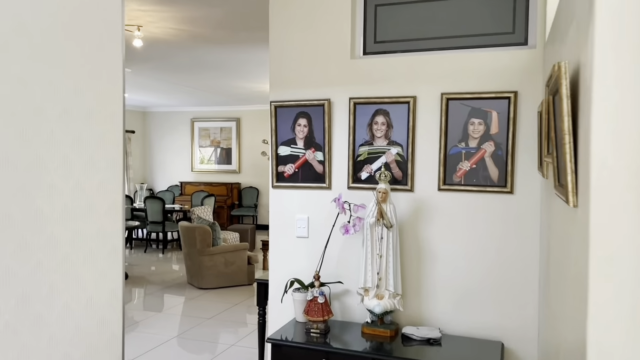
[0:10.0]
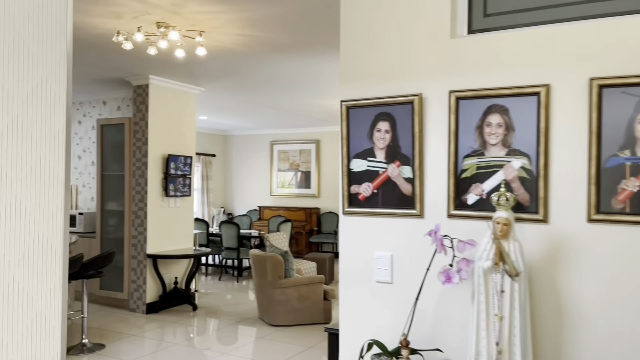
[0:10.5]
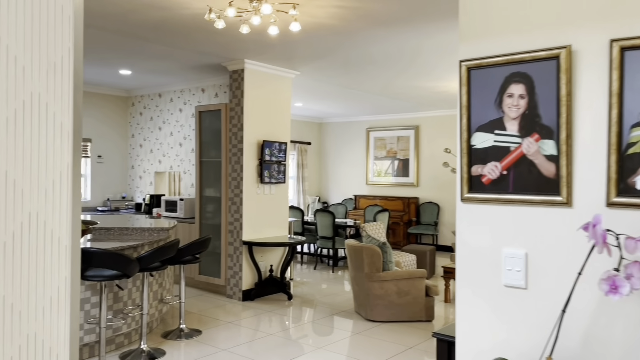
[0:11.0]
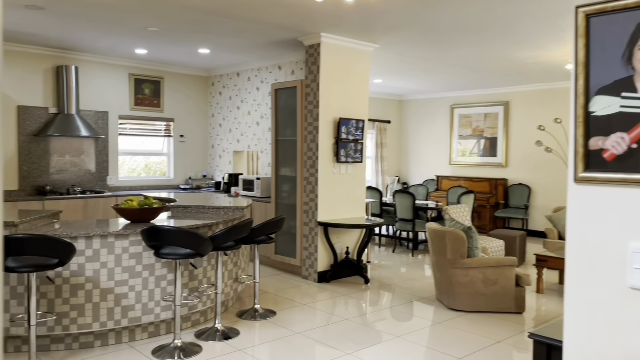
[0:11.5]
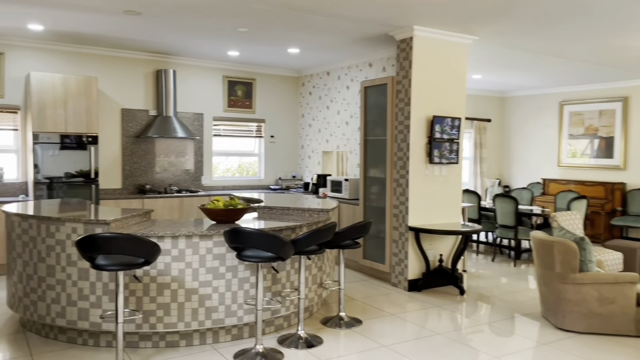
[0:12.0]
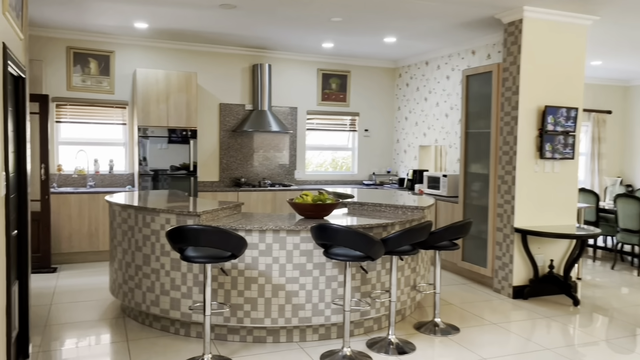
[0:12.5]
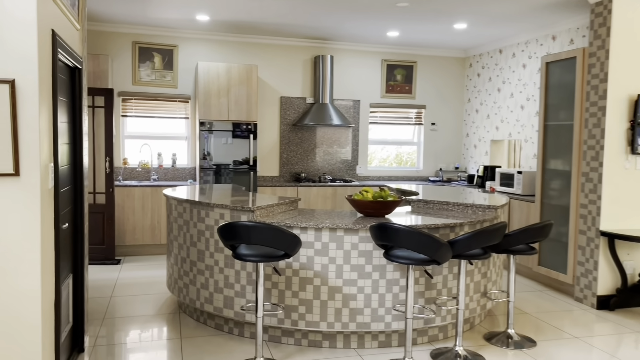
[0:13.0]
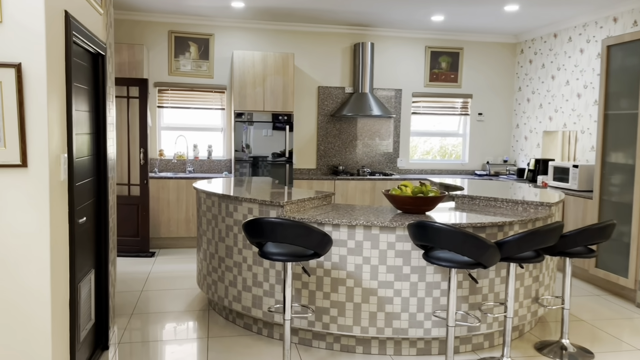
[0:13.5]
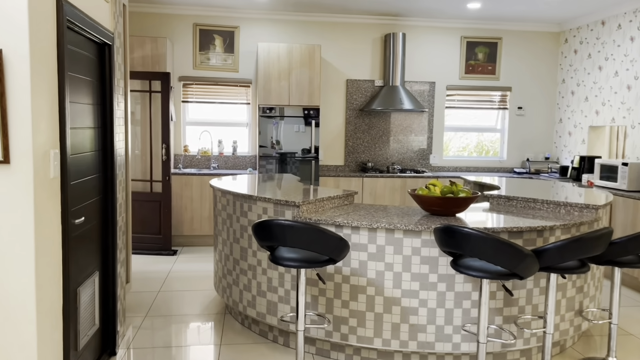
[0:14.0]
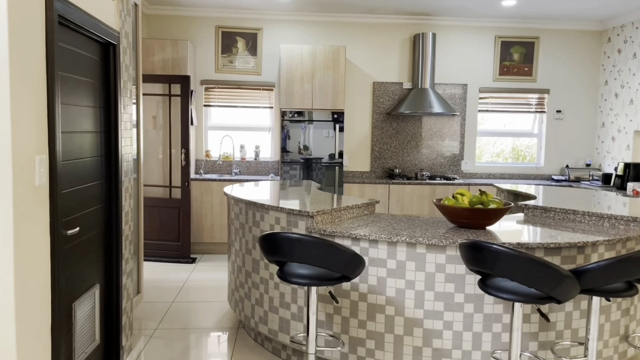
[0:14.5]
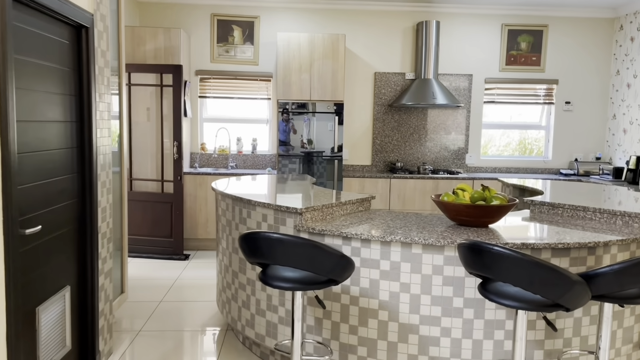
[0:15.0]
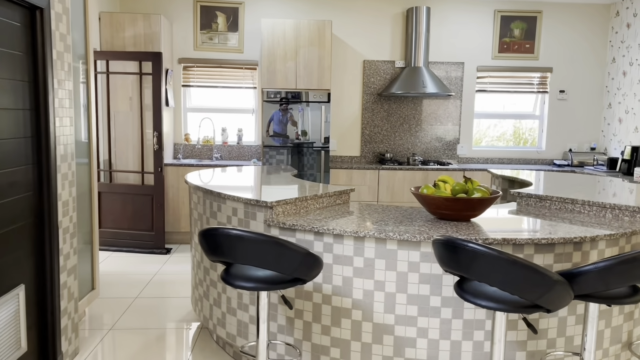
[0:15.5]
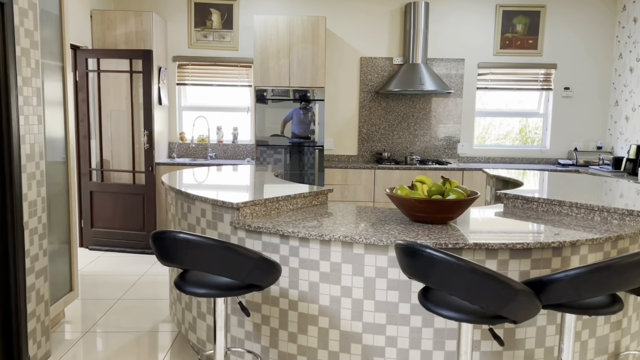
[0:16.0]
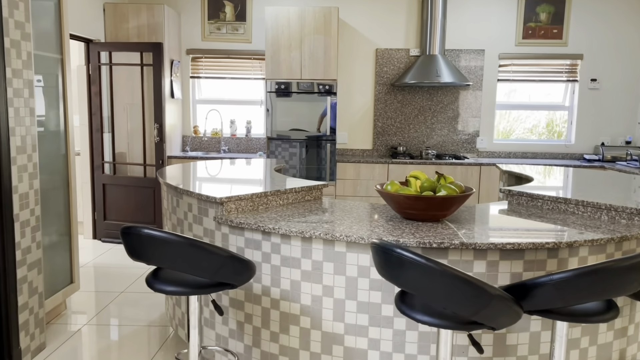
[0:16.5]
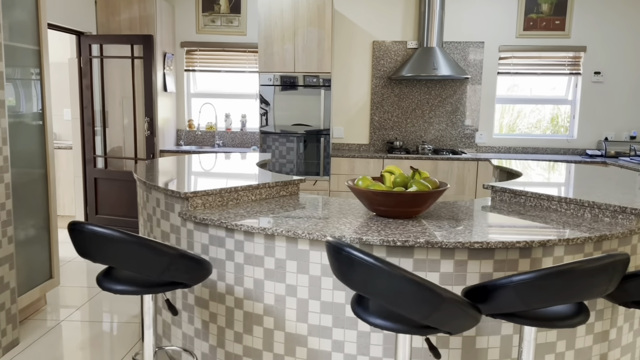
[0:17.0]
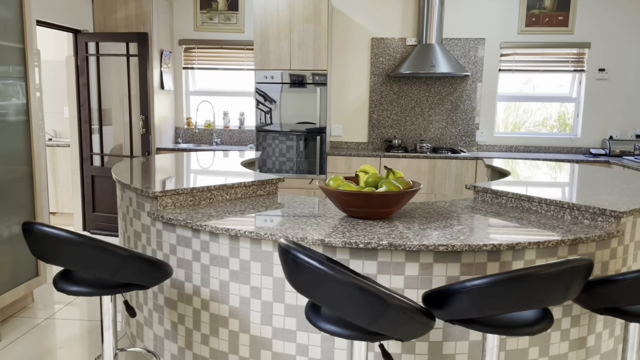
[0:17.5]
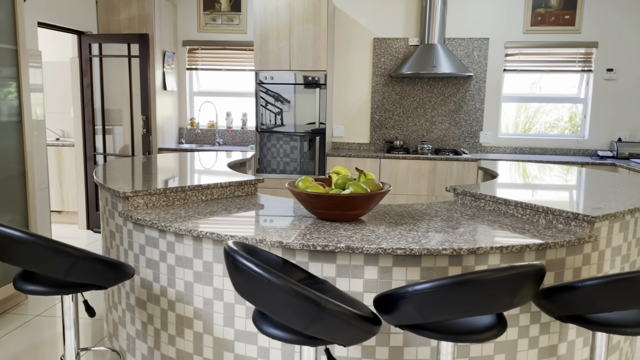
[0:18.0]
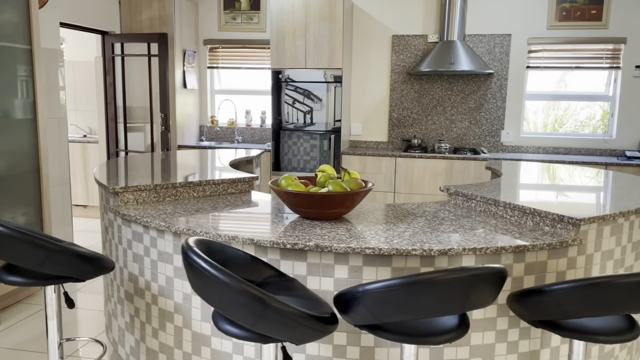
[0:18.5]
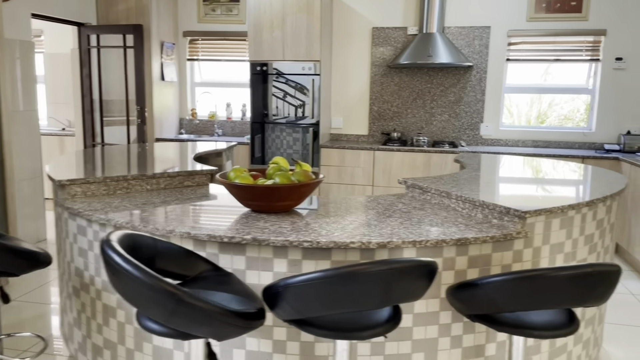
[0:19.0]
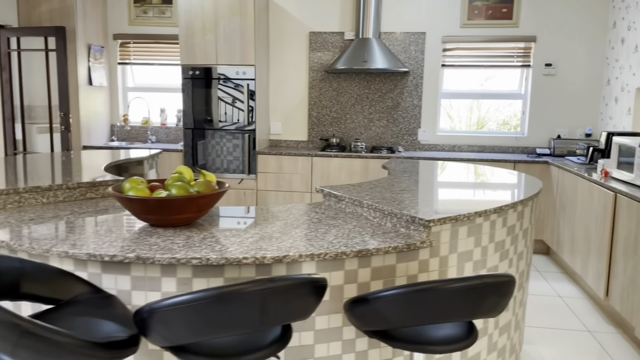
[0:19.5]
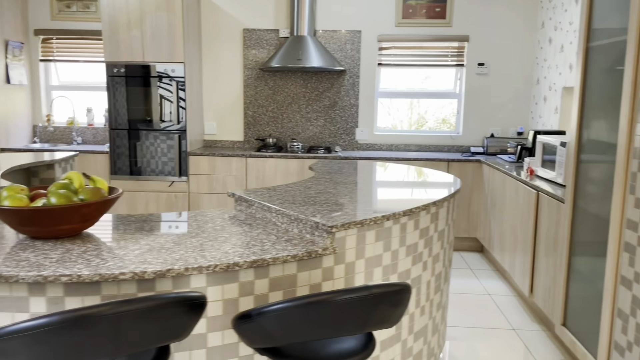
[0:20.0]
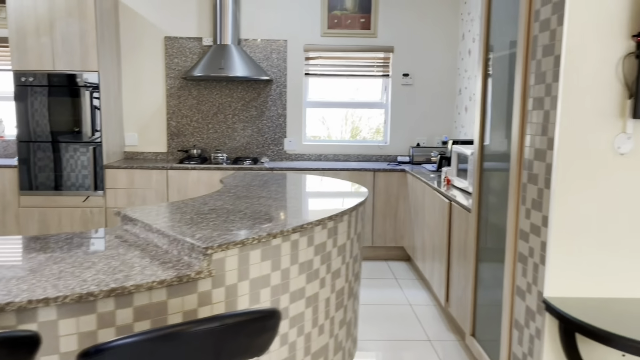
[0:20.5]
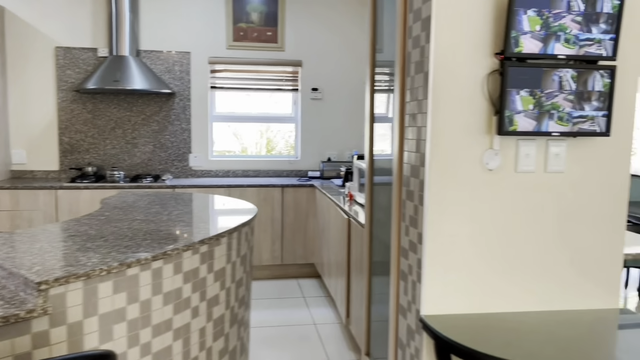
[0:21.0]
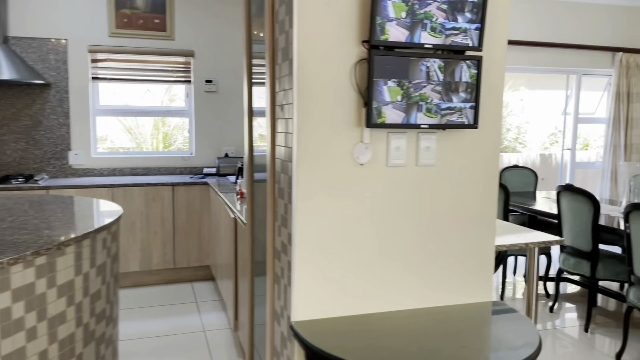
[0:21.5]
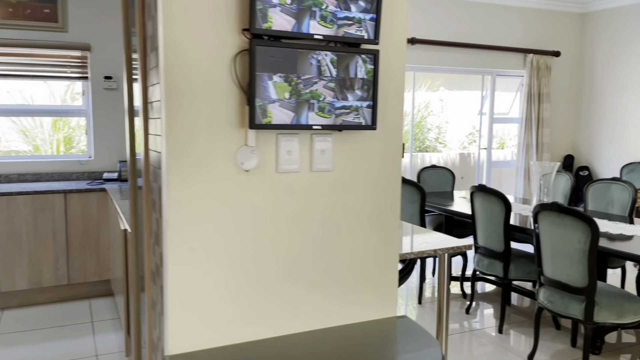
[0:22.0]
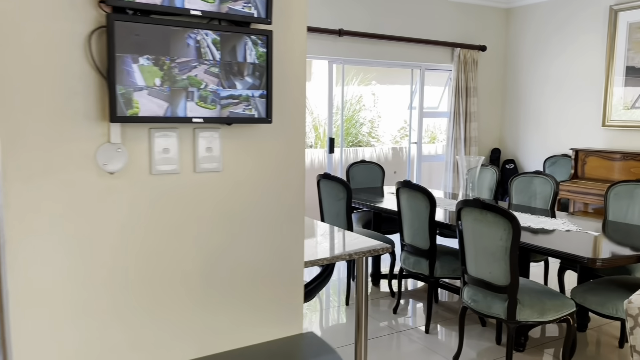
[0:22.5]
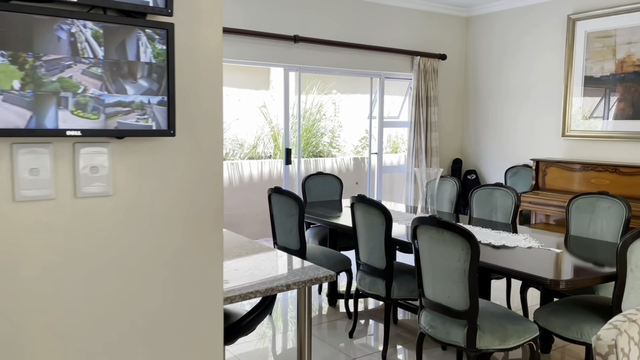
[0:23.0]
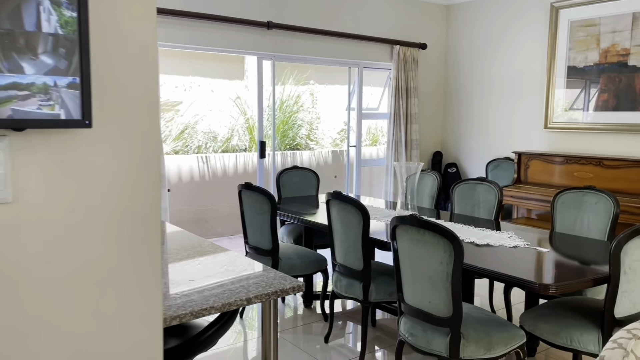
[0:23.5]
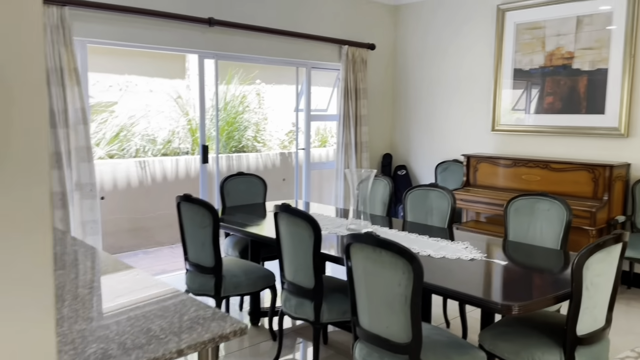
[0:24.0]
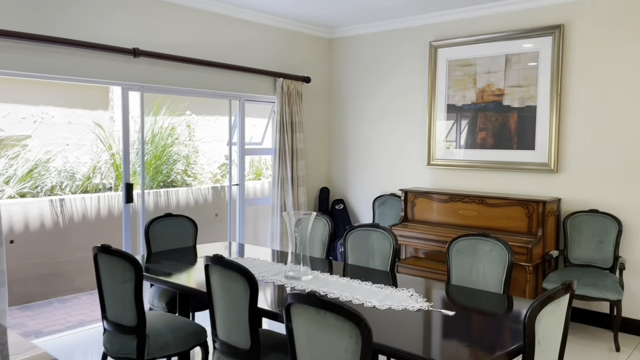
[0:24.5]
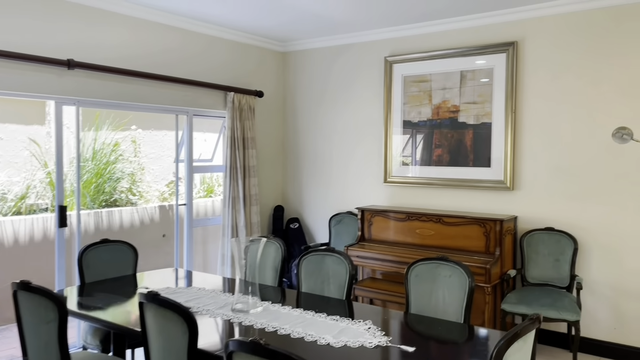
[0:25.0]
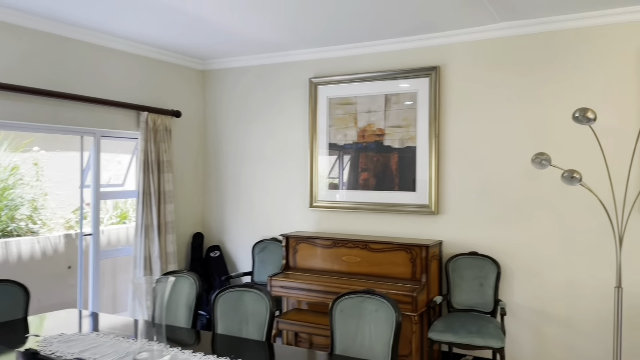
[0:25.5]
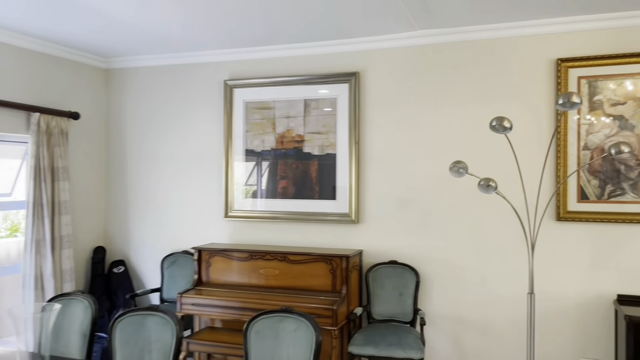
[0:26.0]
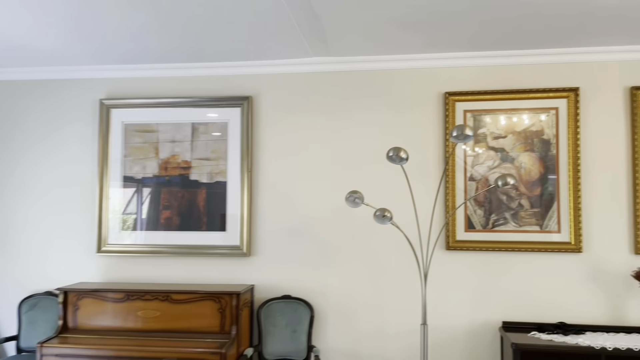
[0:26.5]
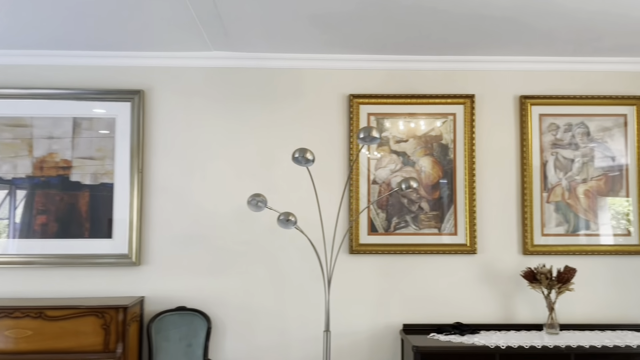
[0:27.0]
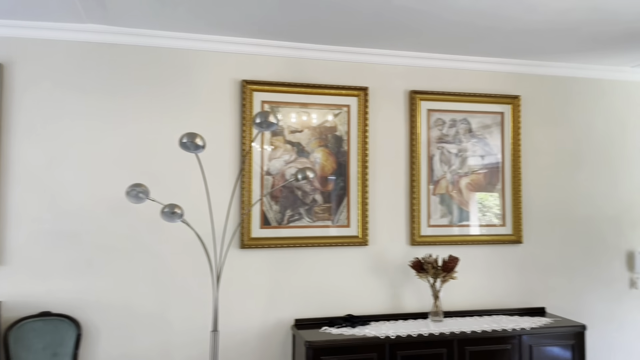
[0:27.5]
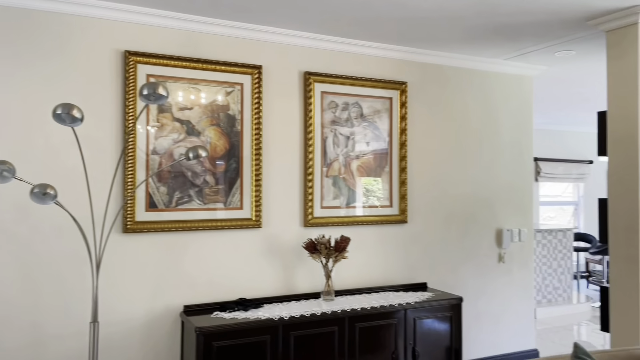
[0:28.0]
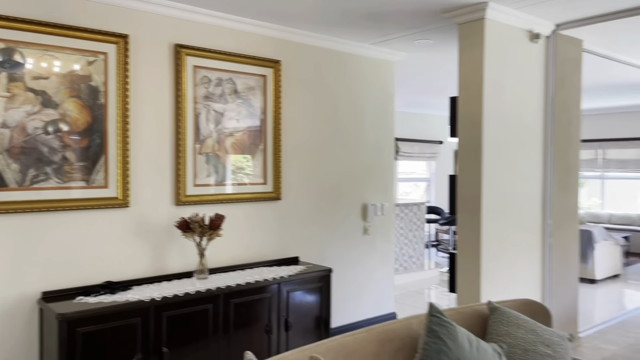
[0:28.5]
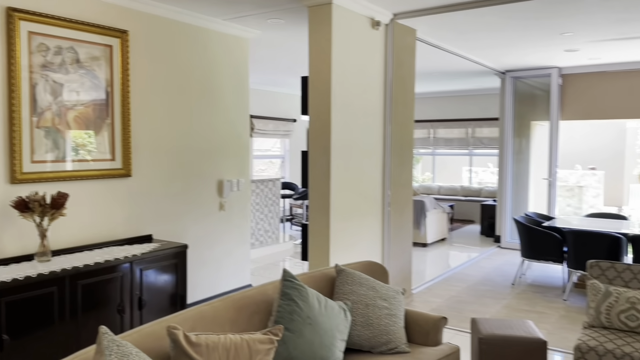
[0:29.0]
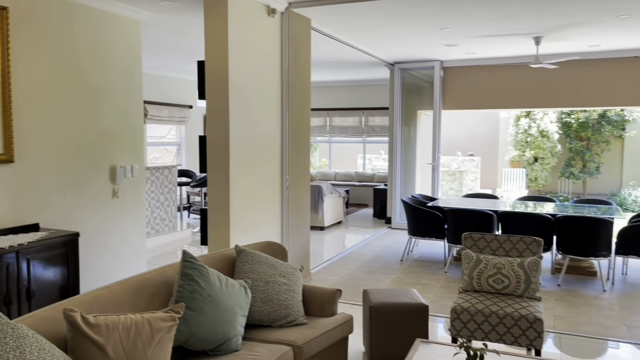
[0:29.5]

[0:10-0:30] What look to be graduation pictures hang on the wall, with a saint in front of them. The view moves to an open-concept kitchen and living room area. There is a reflective-looking oven and a round table with a quite tall basket of fruit. Two screens show security cameras. A very long rectangular table has at least 8 chairs around it, with 2 more chairs from the same set next to it. There is a brown couch with pillows of different colours, and there seems to be a painting on the wall. The background is light yellow, with multiple paintings to the right as well. A piece of dark furniture holds a little vase that seems to have some red flowers in it.